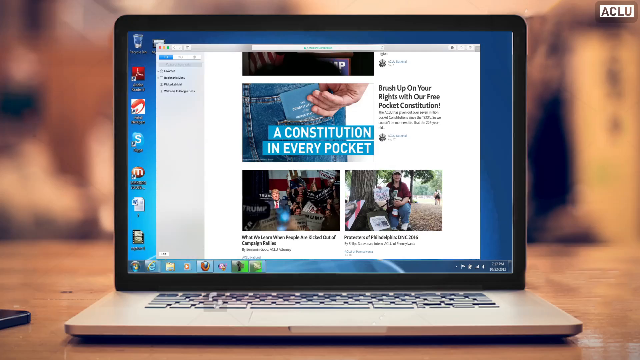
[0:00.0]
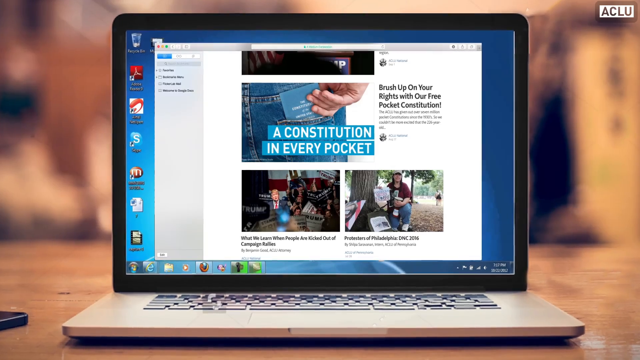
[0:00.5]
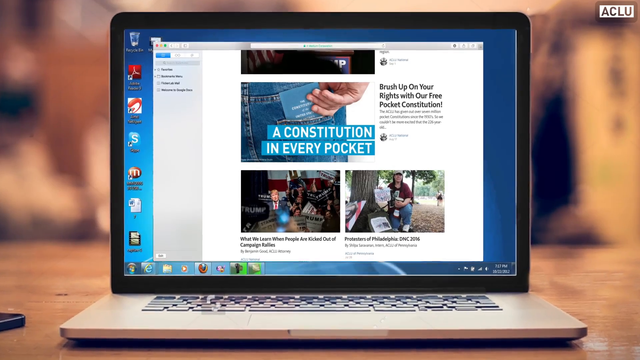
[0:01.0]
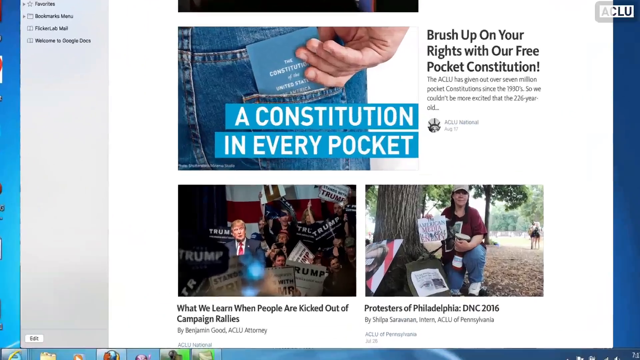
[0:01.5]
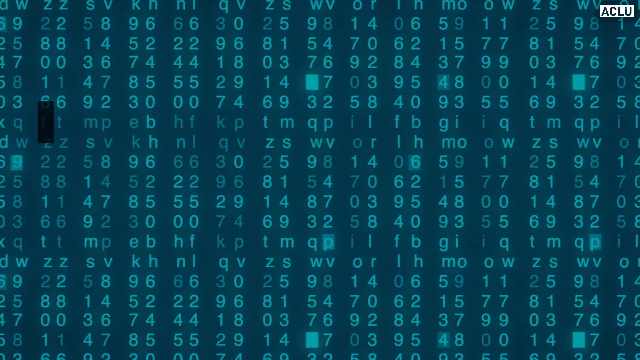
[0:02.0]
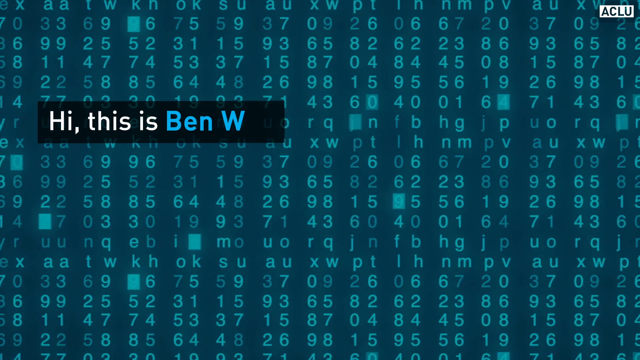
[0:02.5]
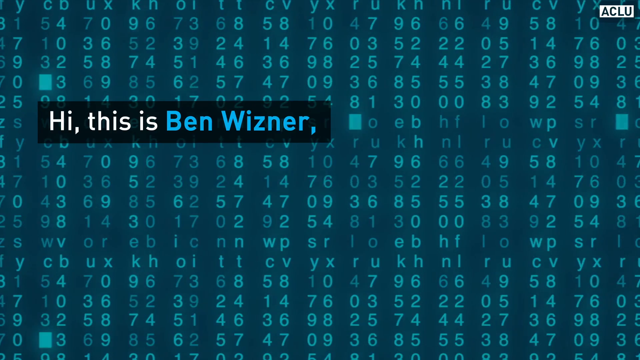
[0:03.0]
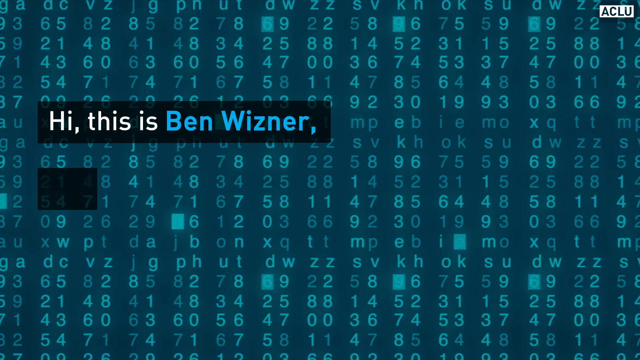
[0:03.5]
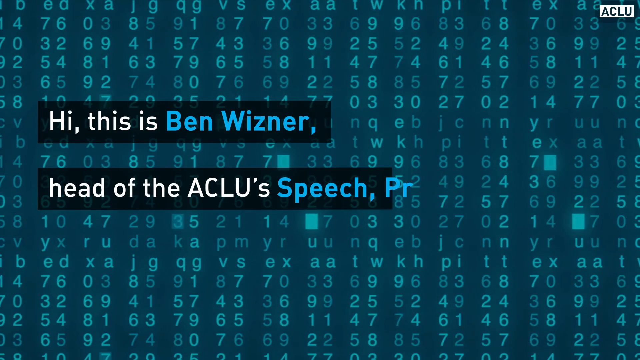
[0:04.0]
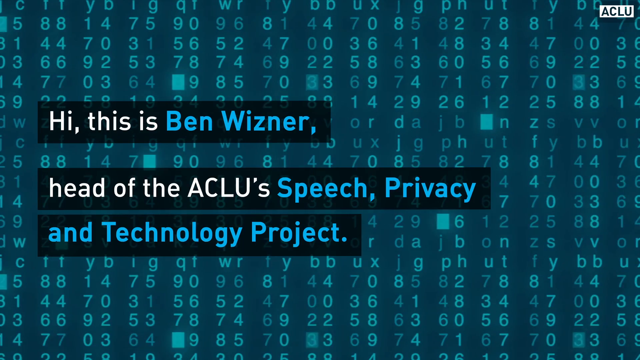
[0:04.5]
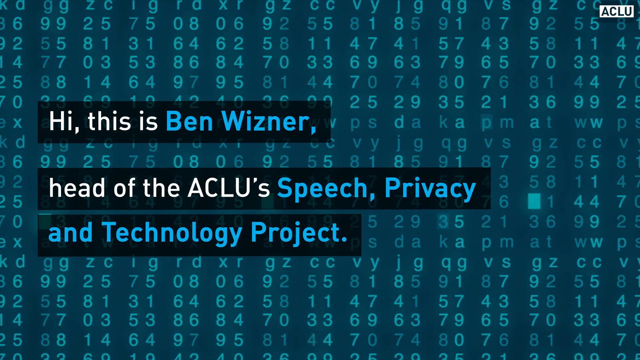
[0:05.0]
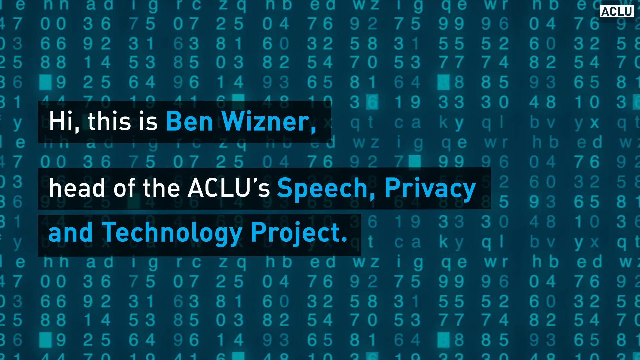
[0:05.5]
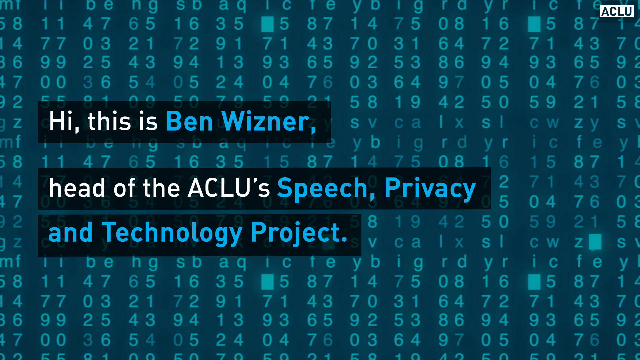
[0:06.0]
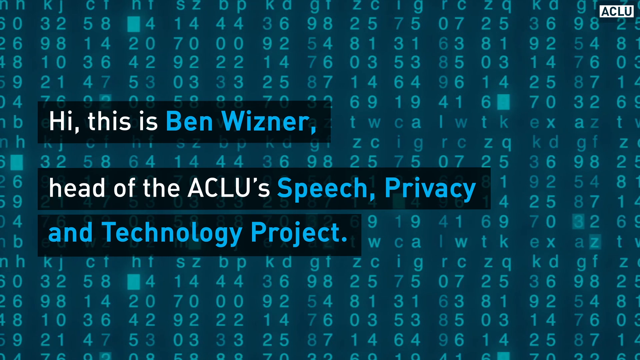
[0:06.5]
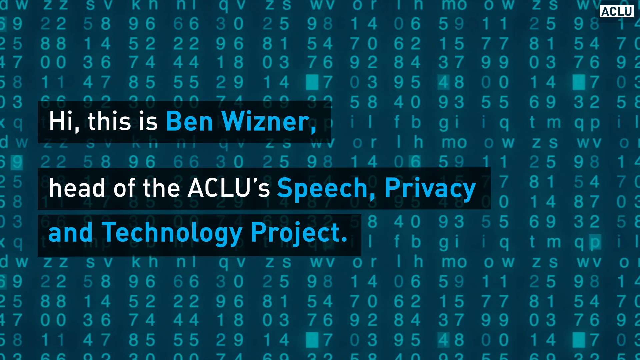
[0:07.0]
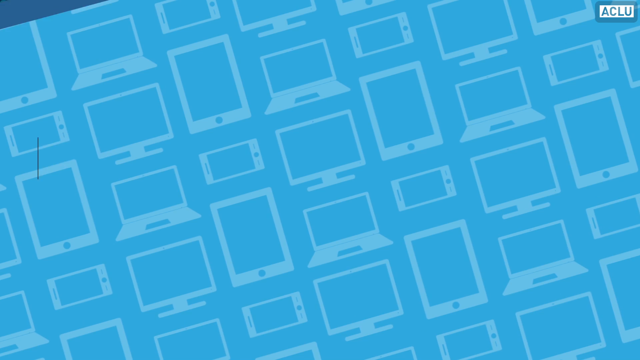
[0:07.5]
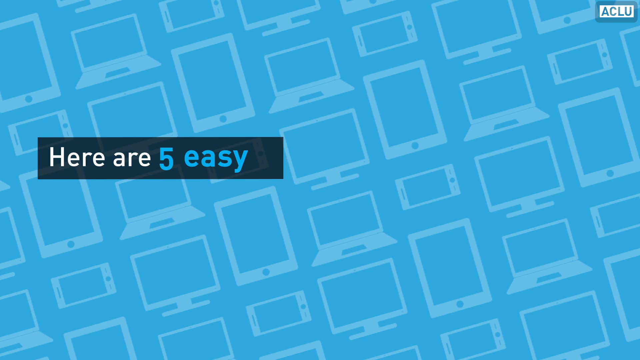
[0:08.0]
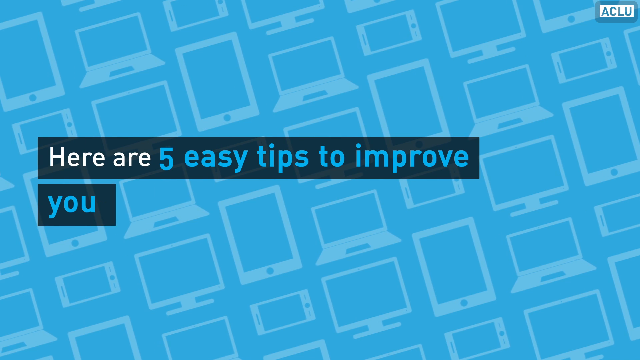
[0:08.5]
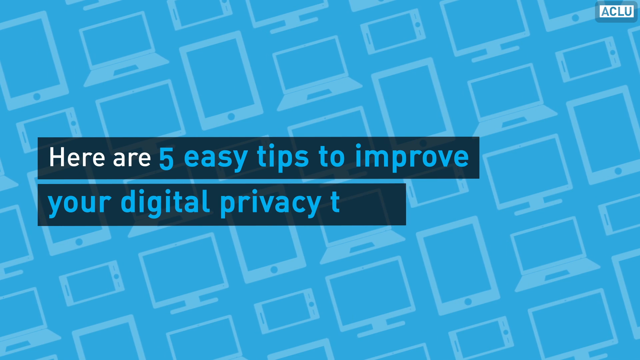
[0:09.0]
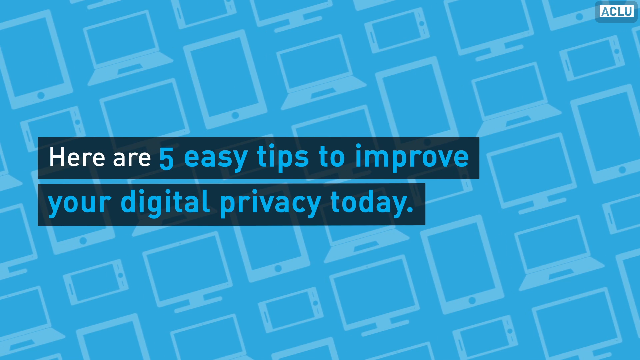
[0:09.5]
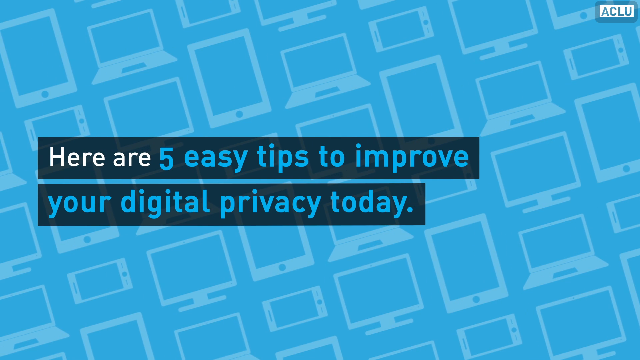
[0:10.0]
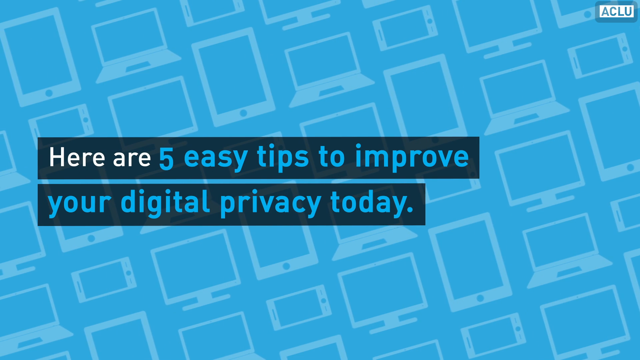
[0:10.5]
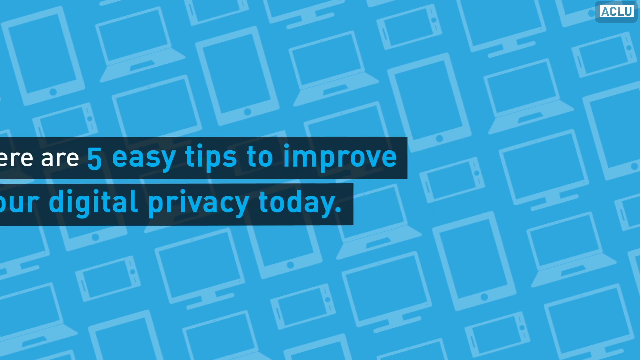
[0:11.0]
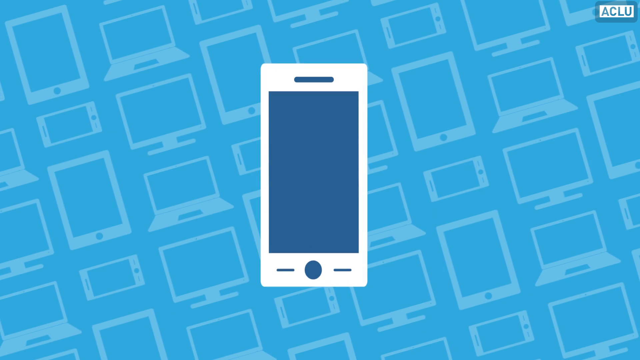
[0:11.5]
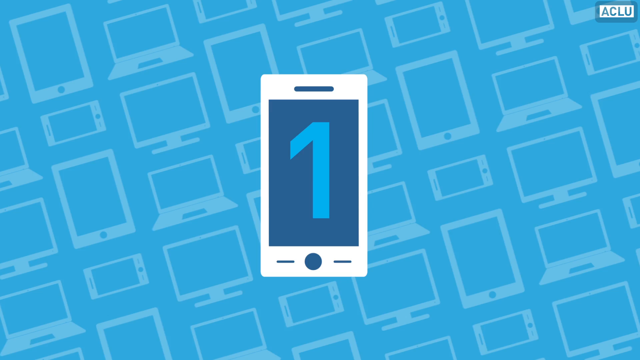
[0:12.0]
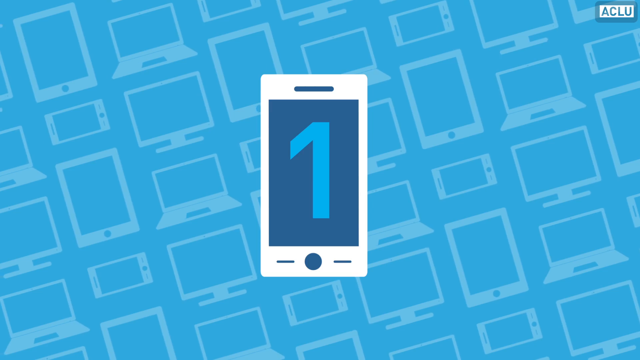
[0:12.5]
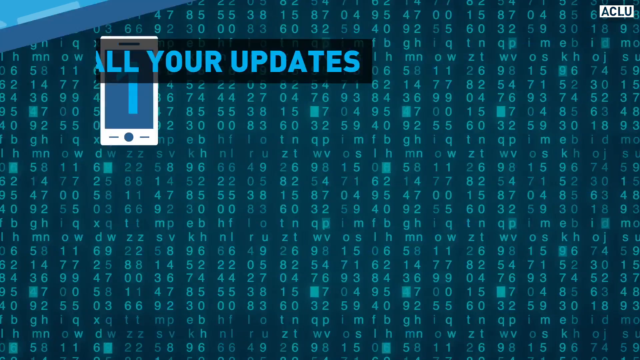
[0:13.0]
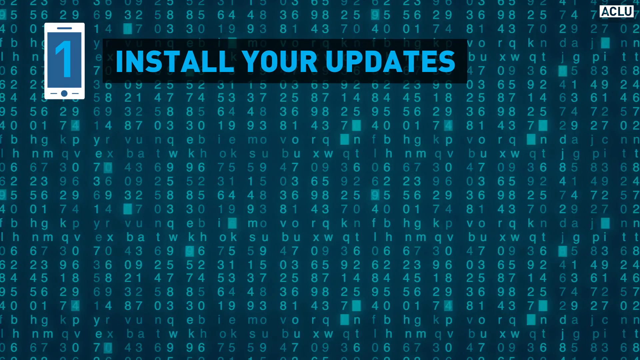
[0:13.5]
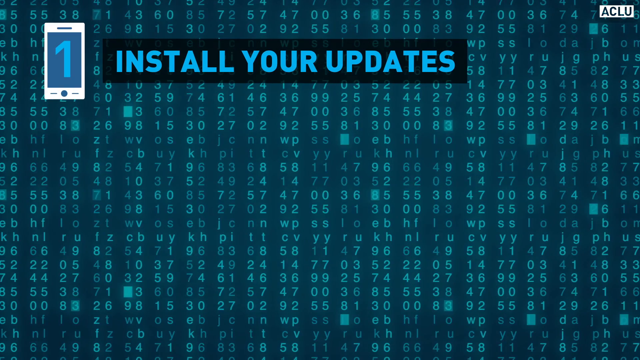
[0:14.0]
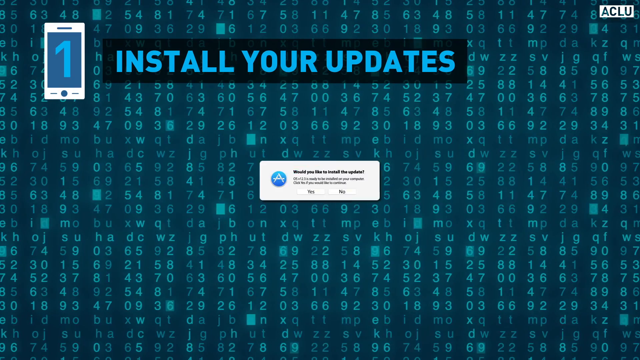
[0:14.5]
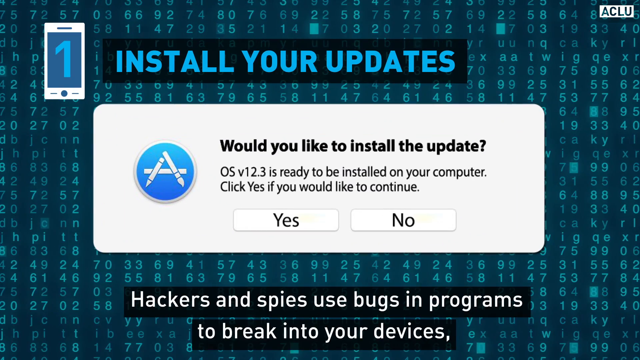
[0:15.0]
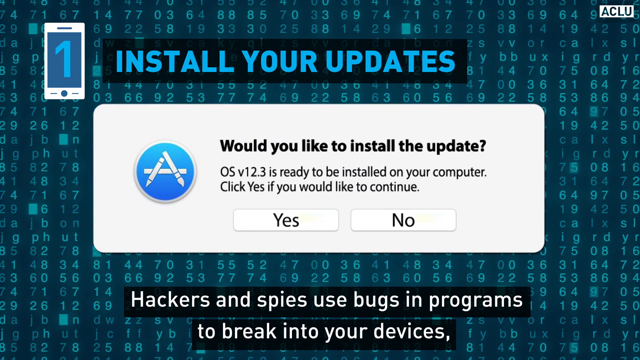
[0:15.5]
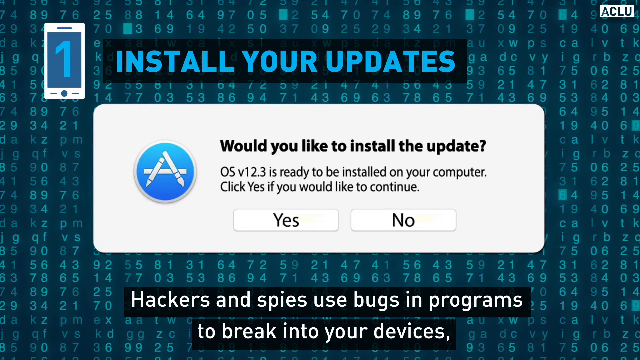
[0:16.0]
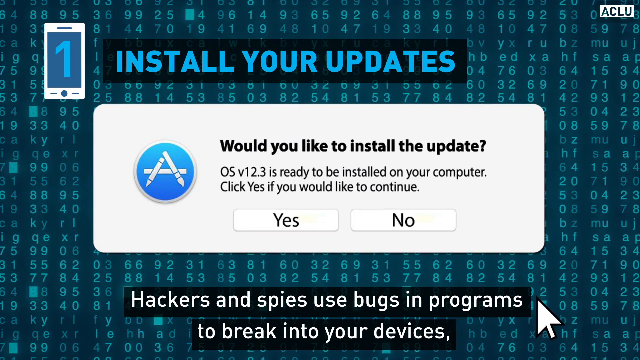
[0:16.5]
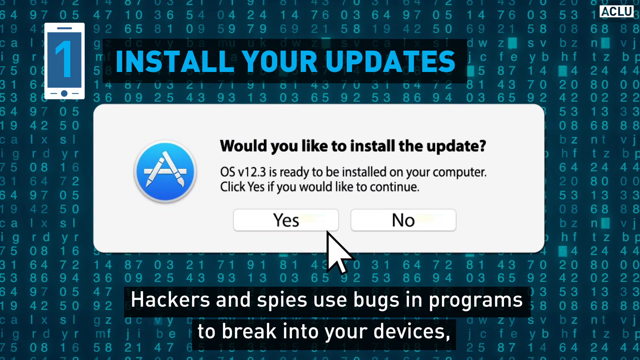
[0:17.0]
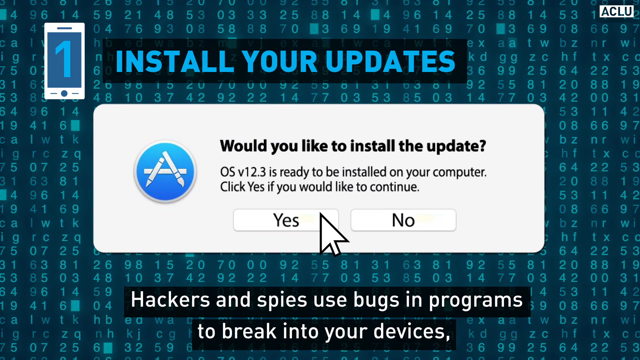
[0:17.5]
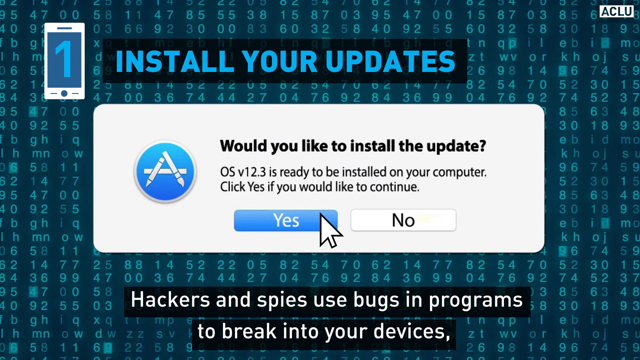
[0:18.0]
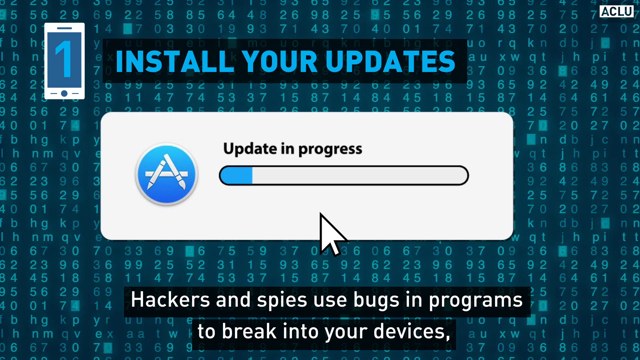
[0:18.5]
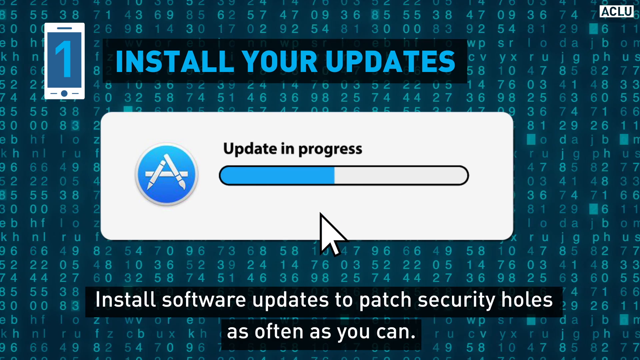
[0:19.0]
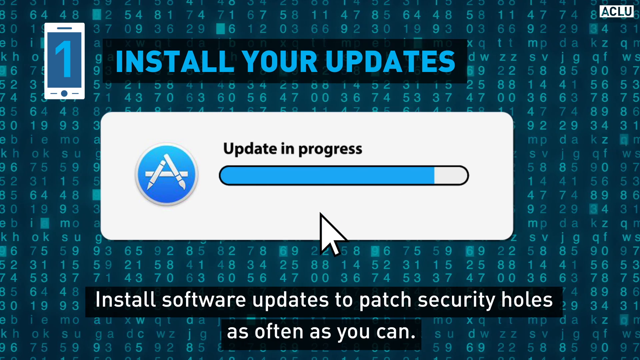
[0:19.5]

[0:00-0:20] The video has a lot of edits. It begins with a laptop showing an open browser, and the camera zooms in. Next comes something like a wallpaper full of blinking blue letters, numbers and boxes. A text overlay reads "hi, this is Ben Wisner, head of ACLU Speech, Privacy and Technology Project. Here are five easy steps to improve your digital privacy today." A countdown follows: "one, install your updates." A pop-up window appears that reads "would you like to install the update?" with options to click yes or no. English subtitles appear throughout. They say, in essence, that hackers and spies use bugs and programs to break into devices and that viewers should download the latest updates for their programs.